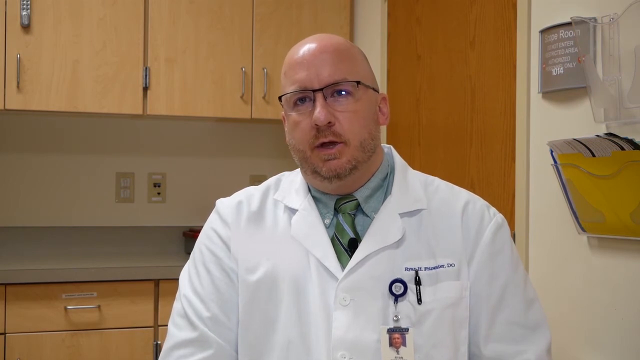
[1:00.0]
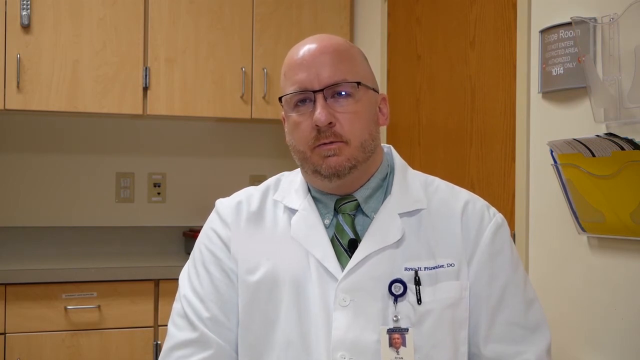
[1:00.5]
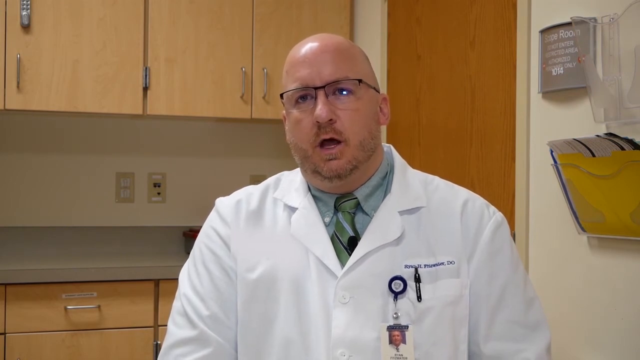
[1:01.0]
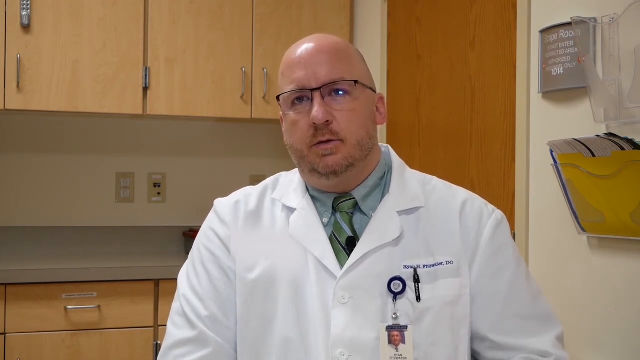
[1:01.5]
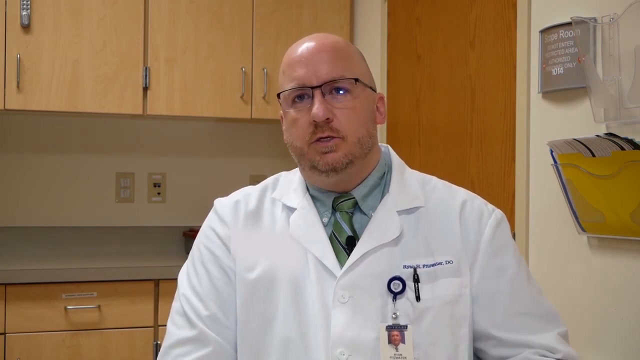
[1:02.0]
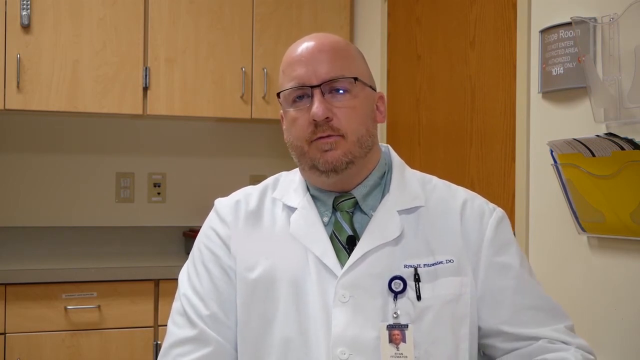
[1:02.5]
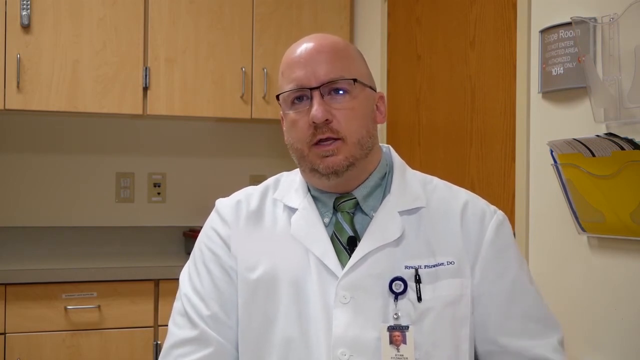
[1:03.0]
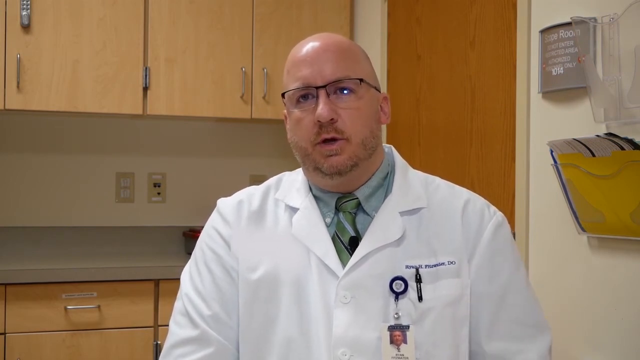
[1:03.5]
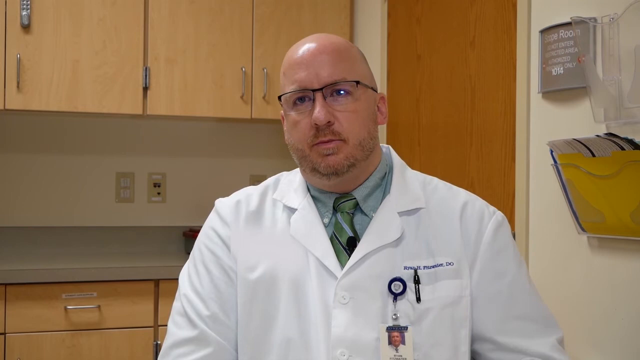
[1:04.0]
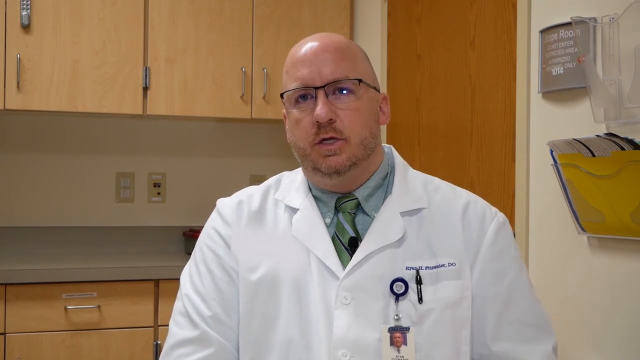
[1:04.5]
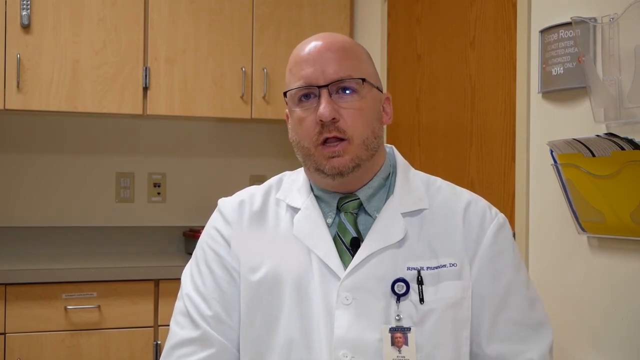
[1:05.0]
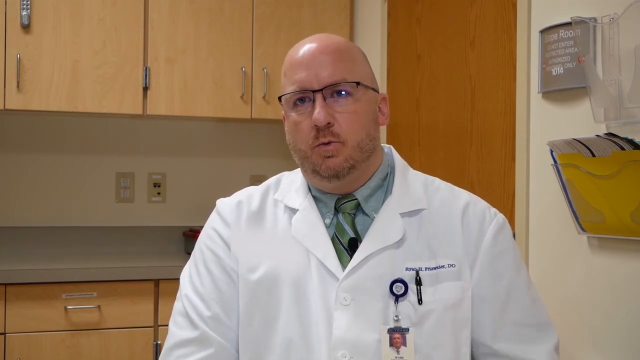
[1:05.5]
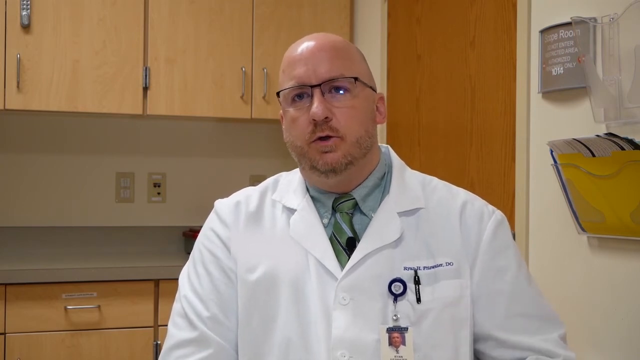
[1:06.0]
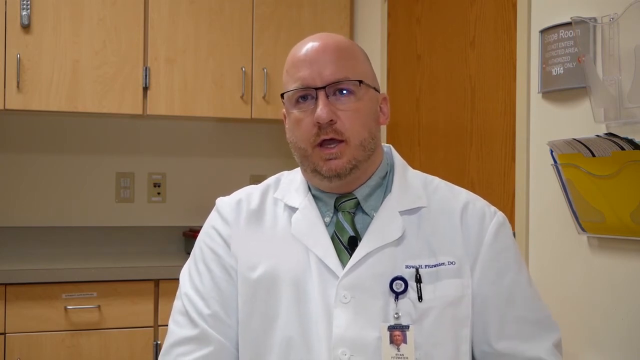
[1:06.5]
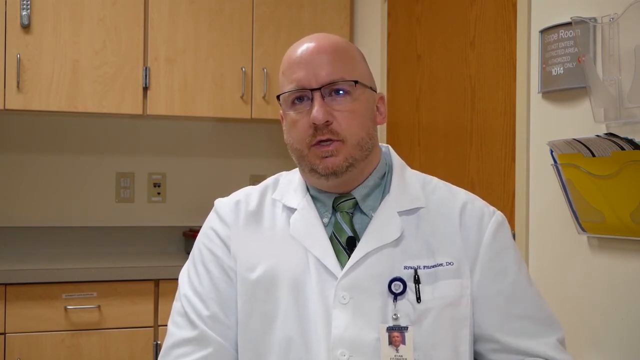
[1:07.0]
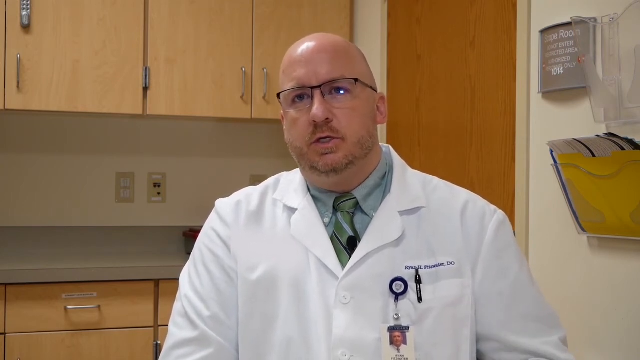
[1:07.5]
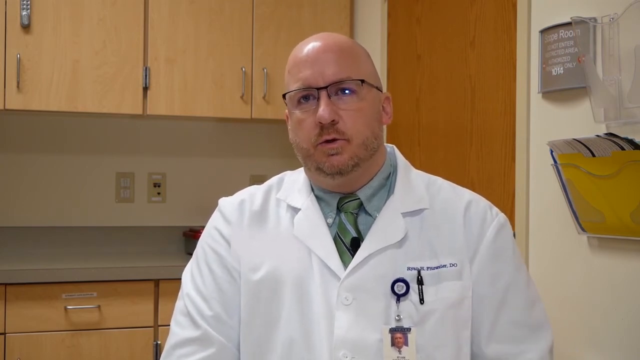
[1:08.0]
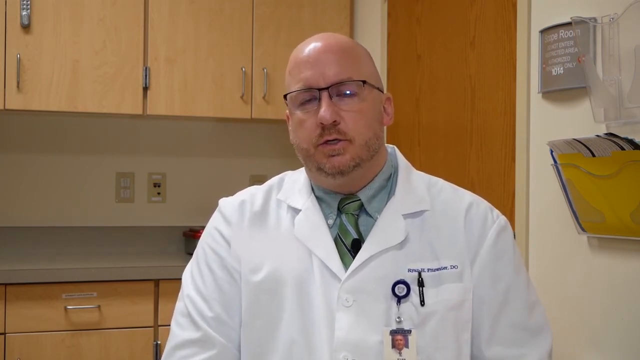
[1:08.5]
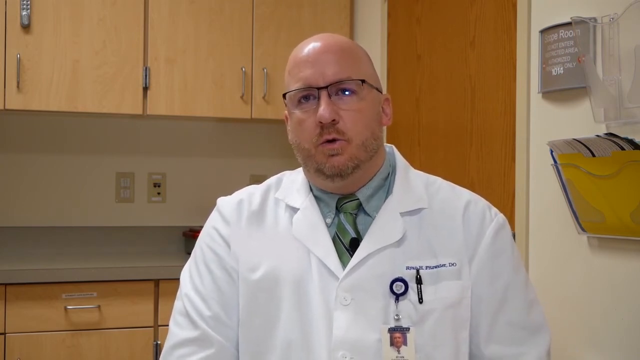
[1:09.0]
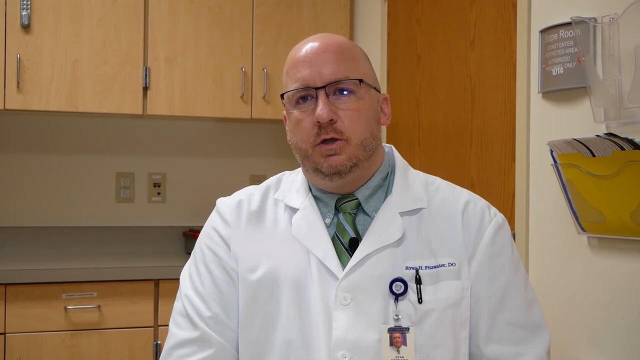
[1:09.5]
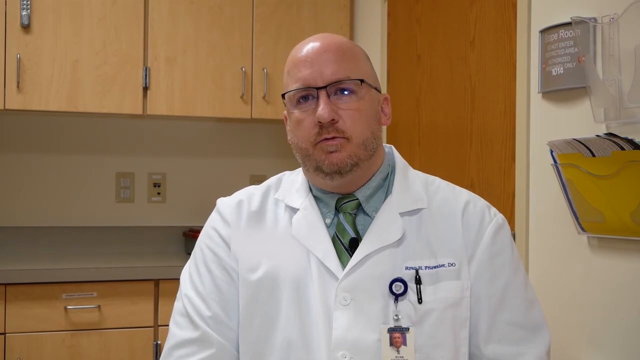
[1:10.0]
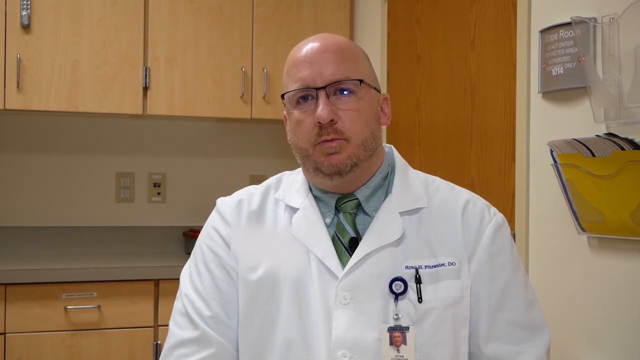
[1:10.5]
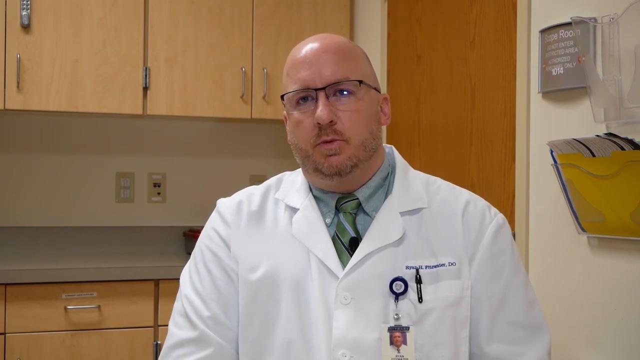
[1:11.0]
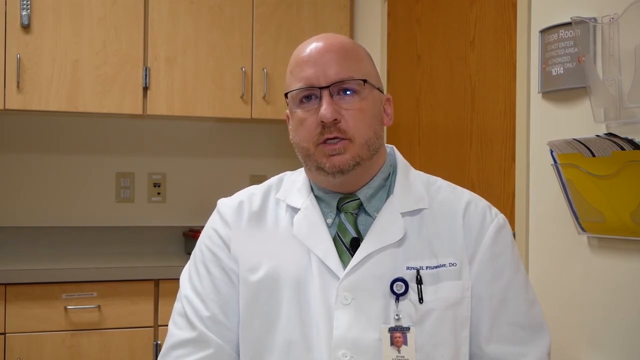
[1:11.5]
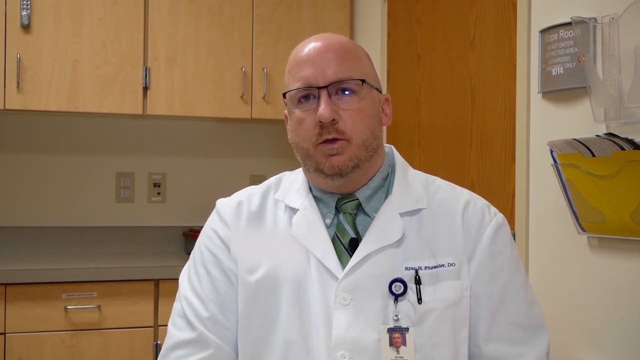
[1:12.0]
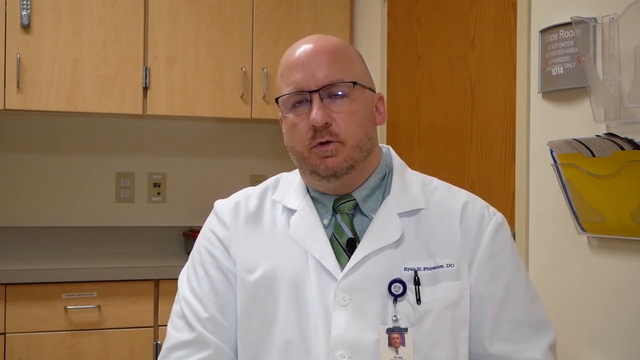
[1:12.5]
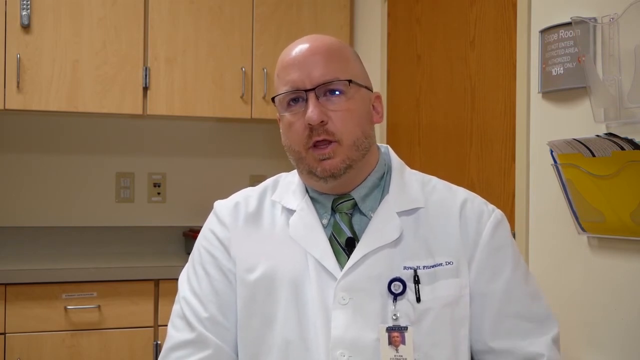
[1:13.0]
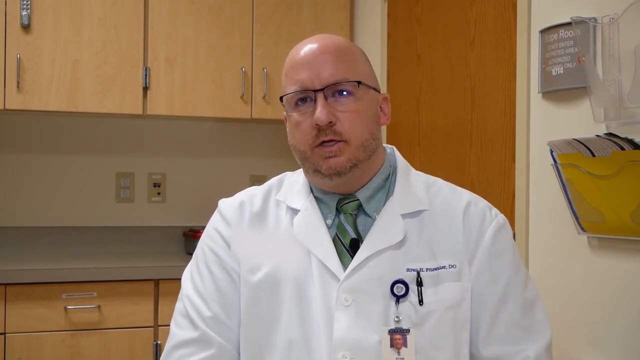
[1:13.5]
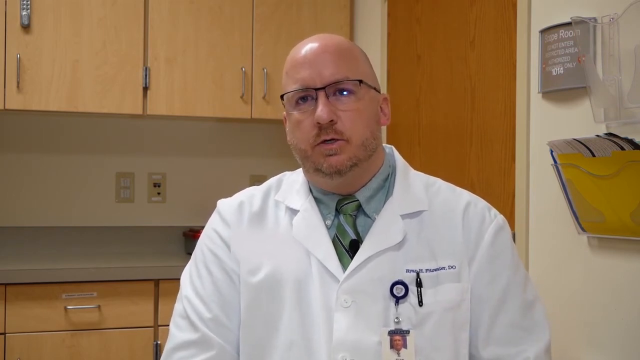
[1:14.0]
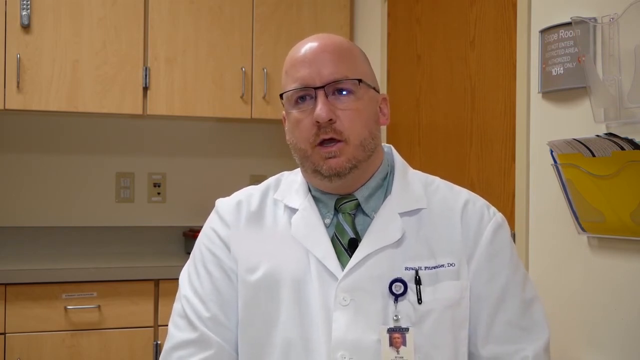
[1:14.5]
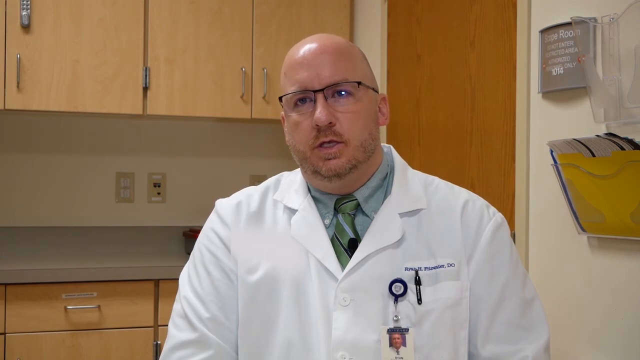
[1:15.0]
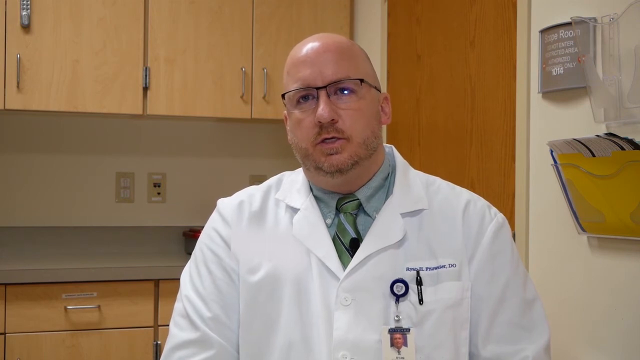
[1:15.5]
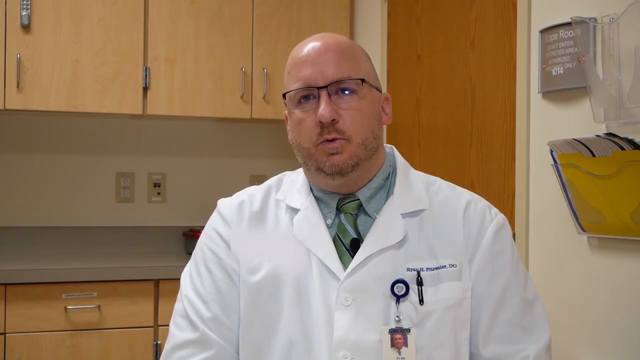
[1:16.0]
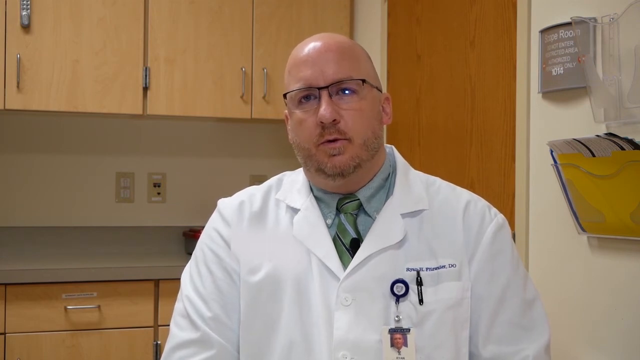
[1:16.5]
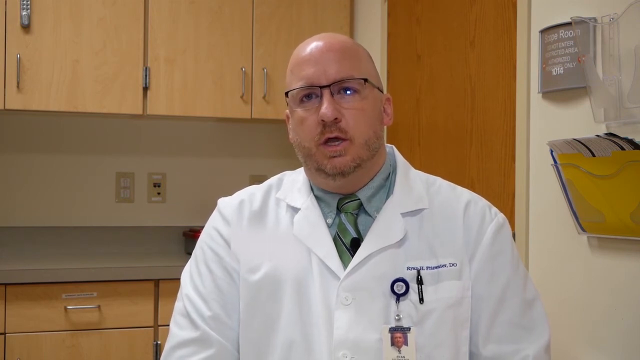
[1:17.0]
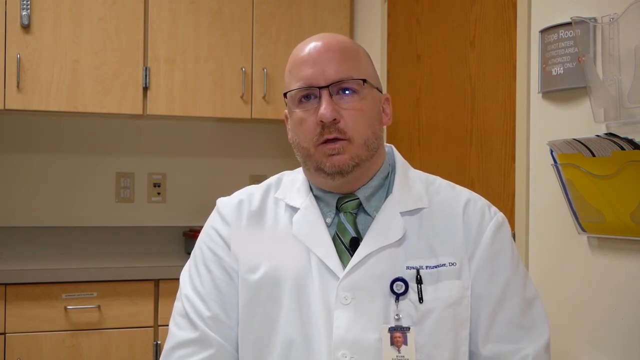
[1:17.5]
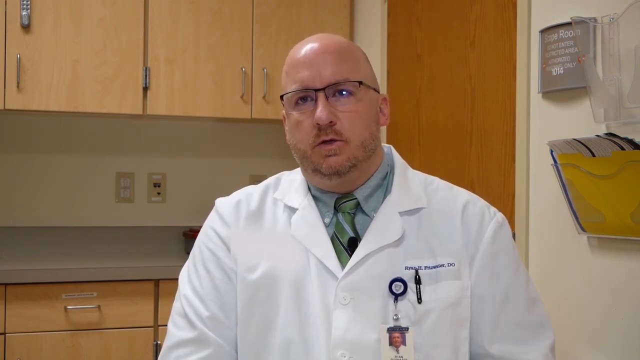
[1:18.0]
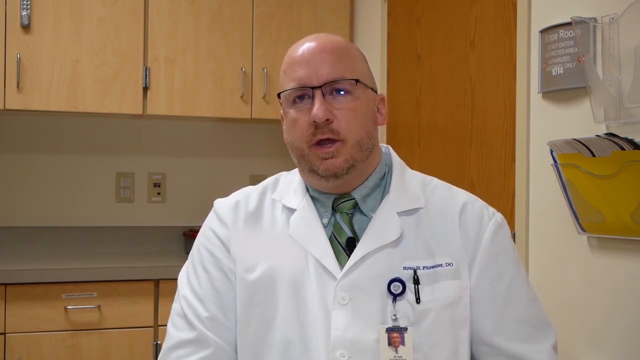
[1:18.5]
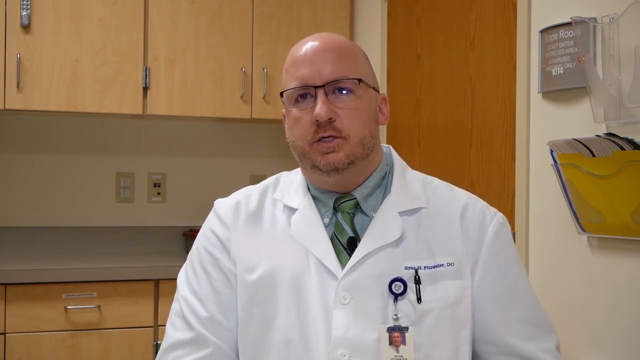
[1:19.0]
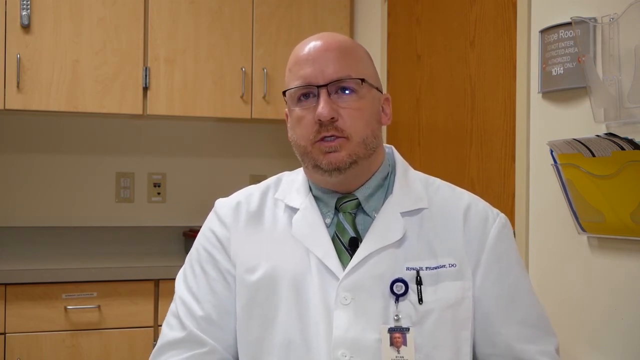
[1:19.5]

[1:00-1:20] The doctor continues to talk, sitting in the examination room. At the top left, behind his head, are light brown wooden cabinet doors, and also to the left behind him is a gray counter. He wears eyeglasses, has a short beard and mustache, and the top of his head is bald; he is Caucasian. A black pen is on the front pocket of his white lab coat, and a small picture of the doctor, some sort of identification tag, is attached to the pocket. A black microphone is attached to what looks like his tie. His white lab coat has his name on the left side of the chest. The walls of the room are white. Behind him to the right is a wooden door. To his right and behind him are hanging files in a clear file holder, and there is an empty clear file holder in the top right corner.